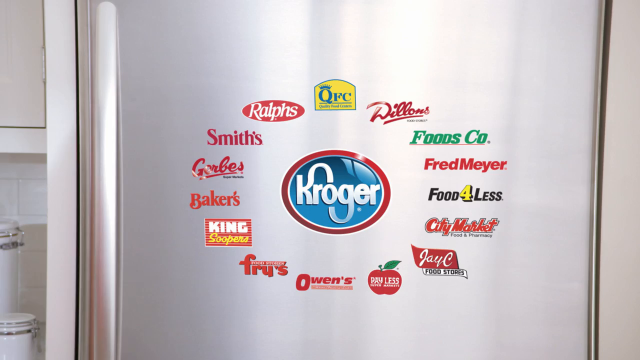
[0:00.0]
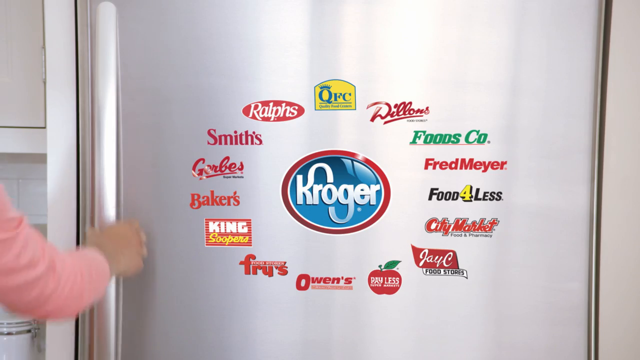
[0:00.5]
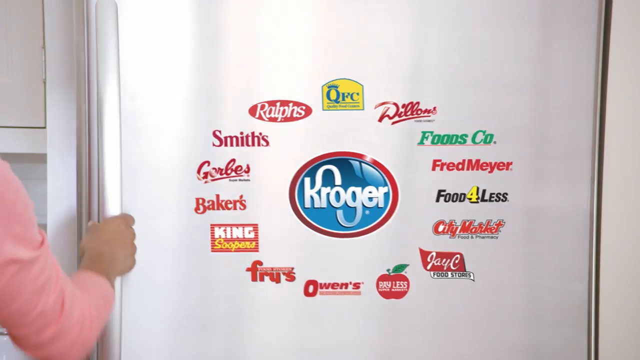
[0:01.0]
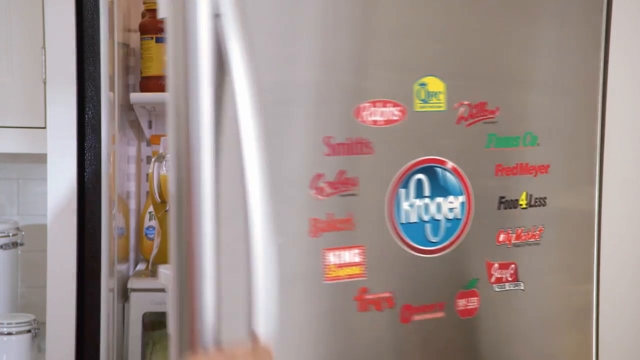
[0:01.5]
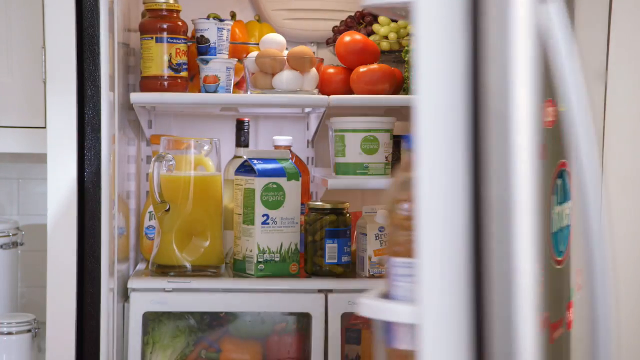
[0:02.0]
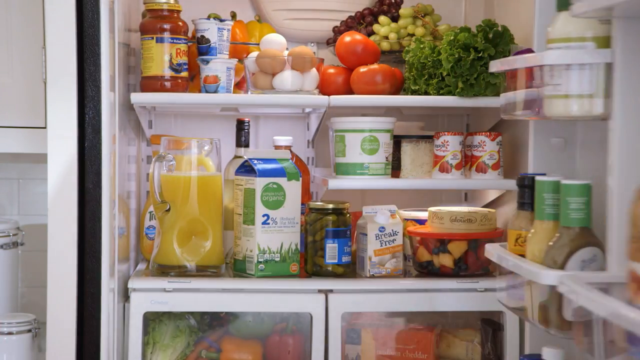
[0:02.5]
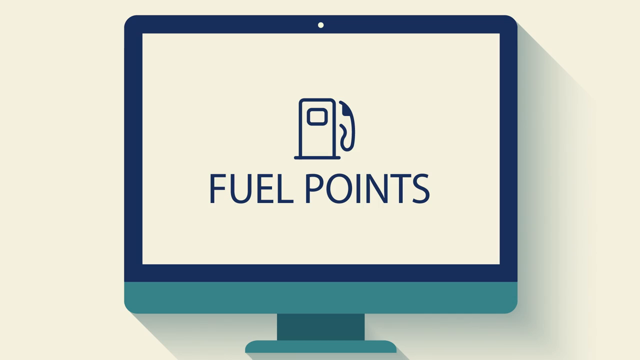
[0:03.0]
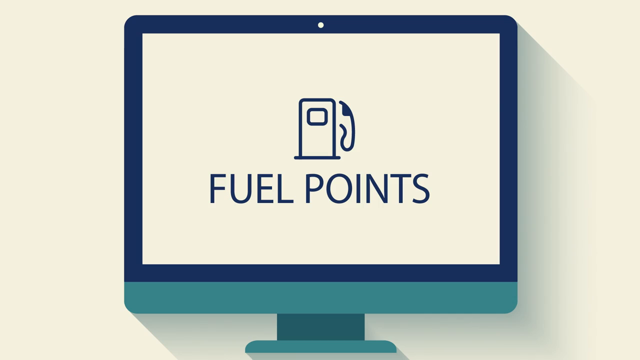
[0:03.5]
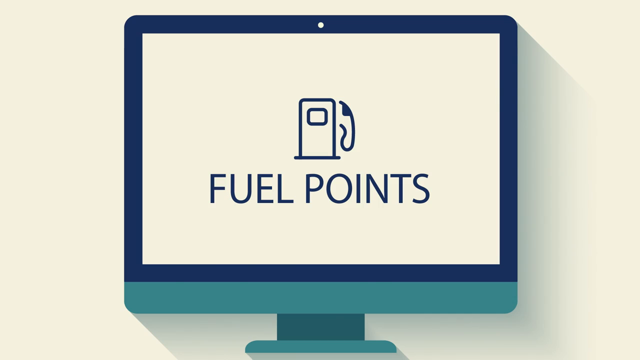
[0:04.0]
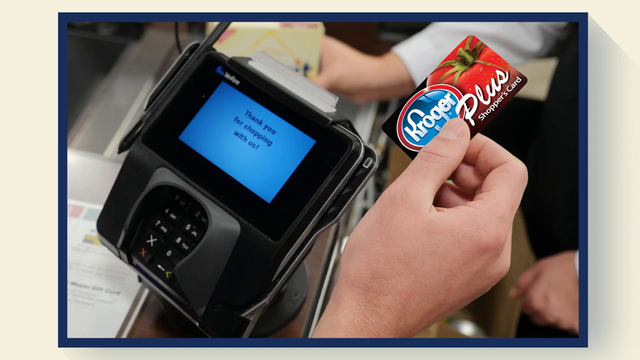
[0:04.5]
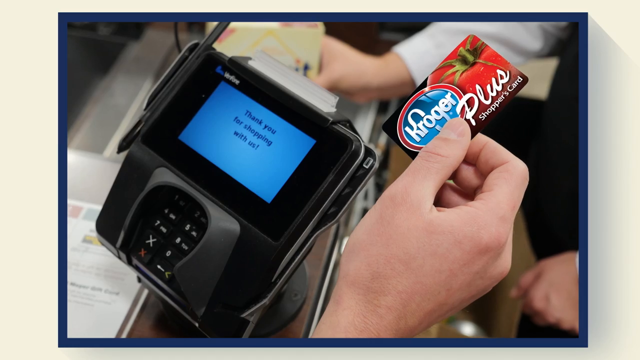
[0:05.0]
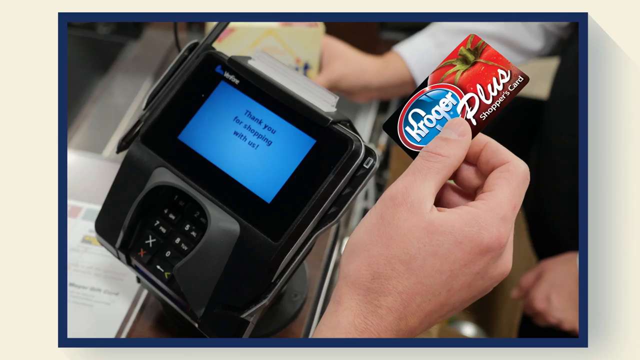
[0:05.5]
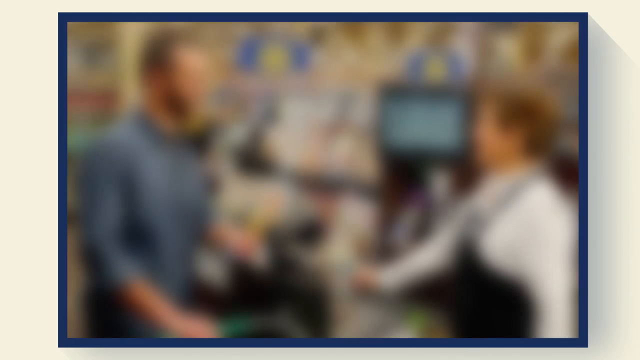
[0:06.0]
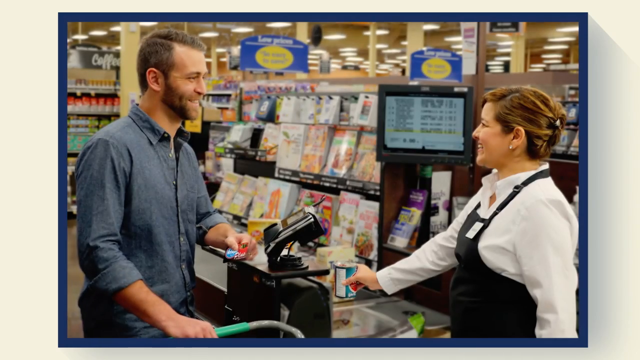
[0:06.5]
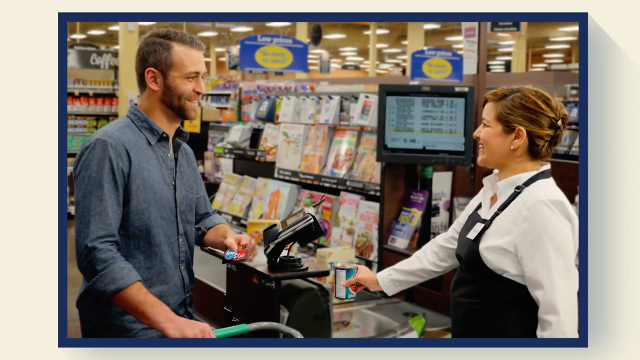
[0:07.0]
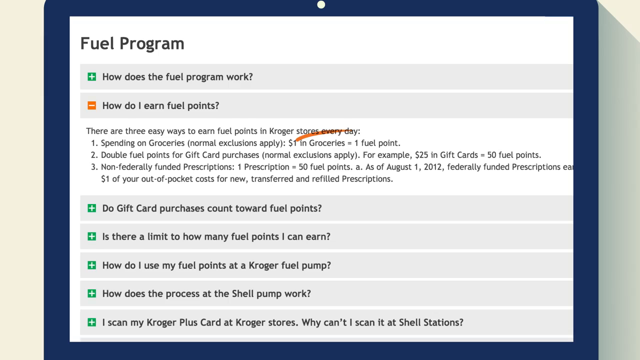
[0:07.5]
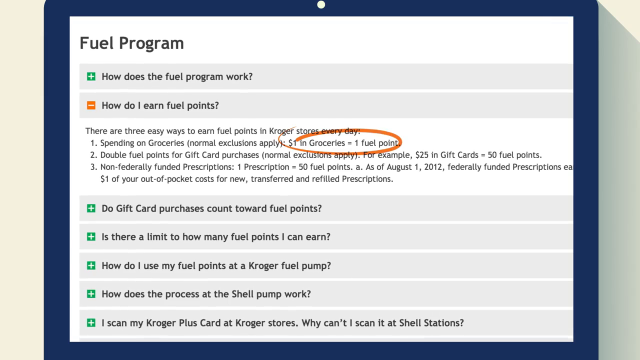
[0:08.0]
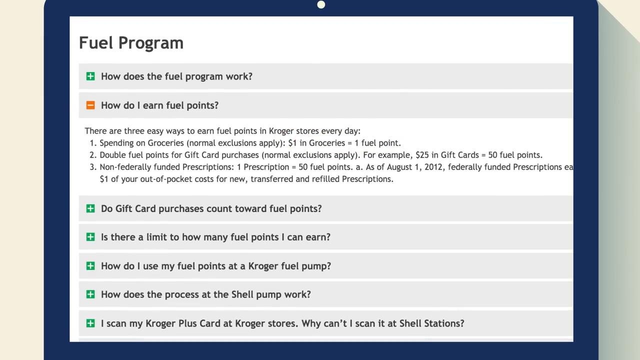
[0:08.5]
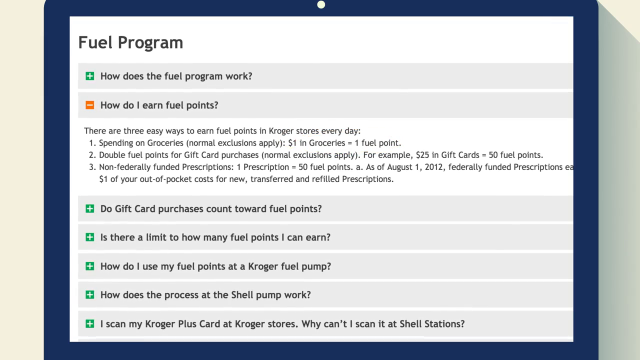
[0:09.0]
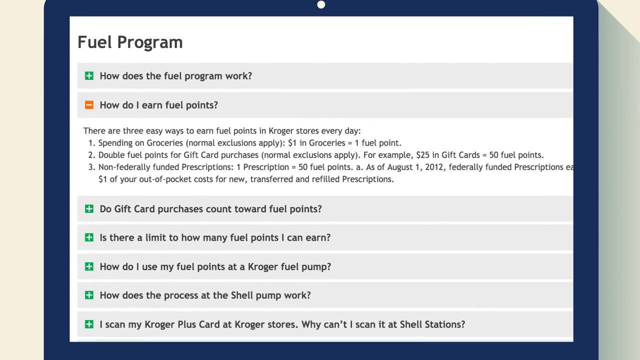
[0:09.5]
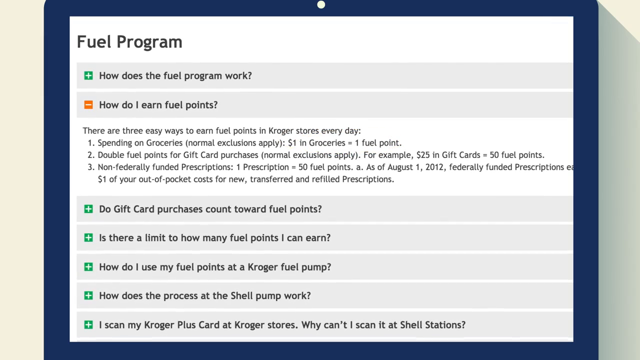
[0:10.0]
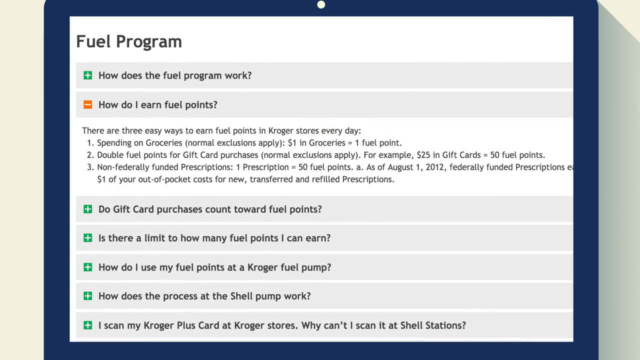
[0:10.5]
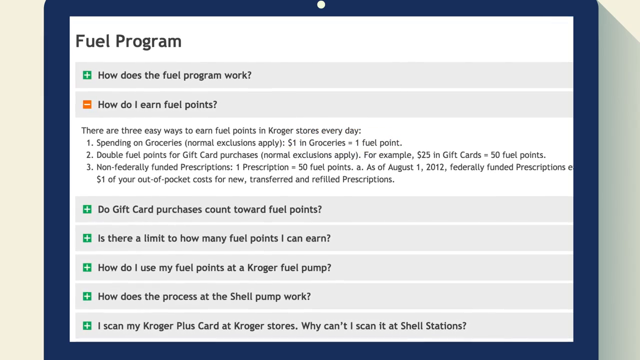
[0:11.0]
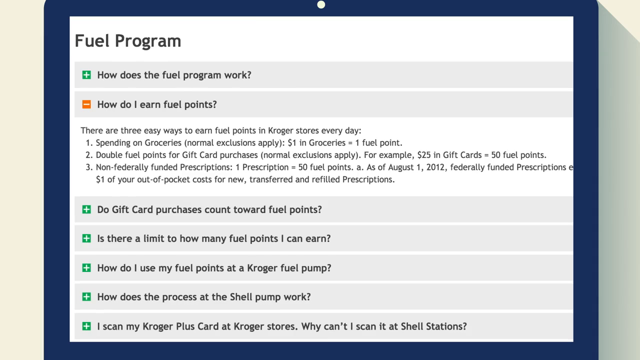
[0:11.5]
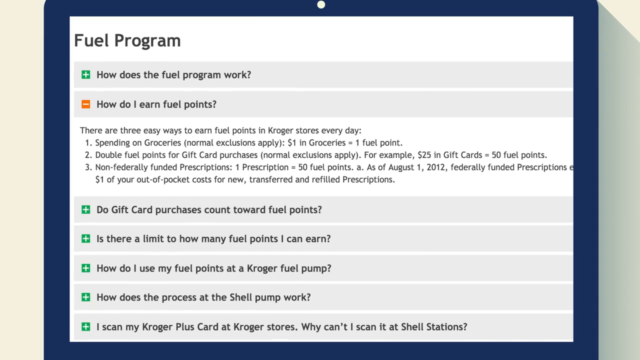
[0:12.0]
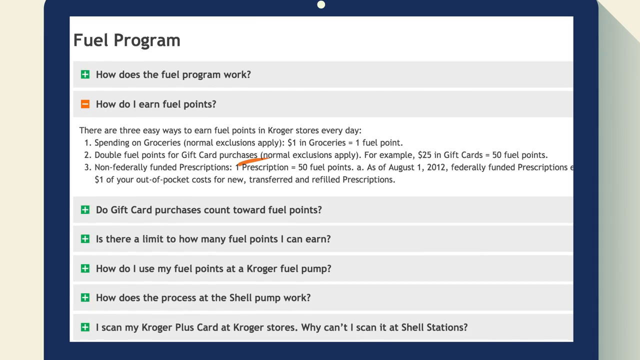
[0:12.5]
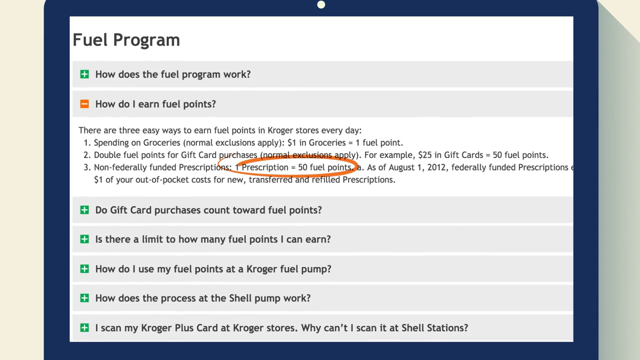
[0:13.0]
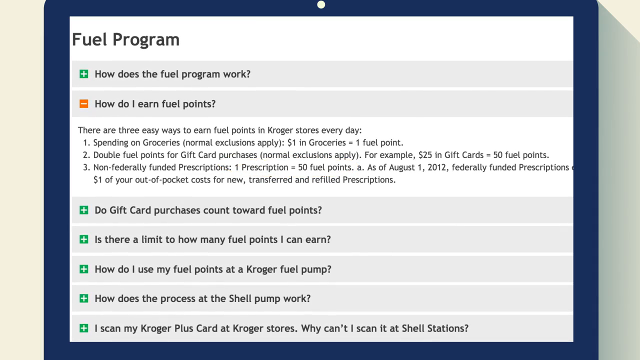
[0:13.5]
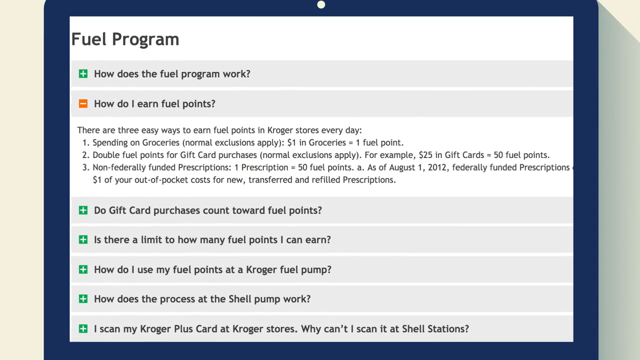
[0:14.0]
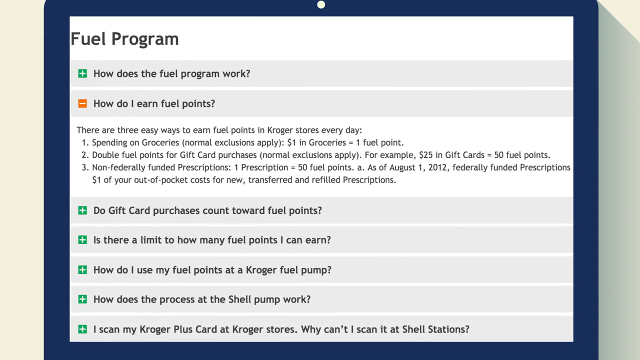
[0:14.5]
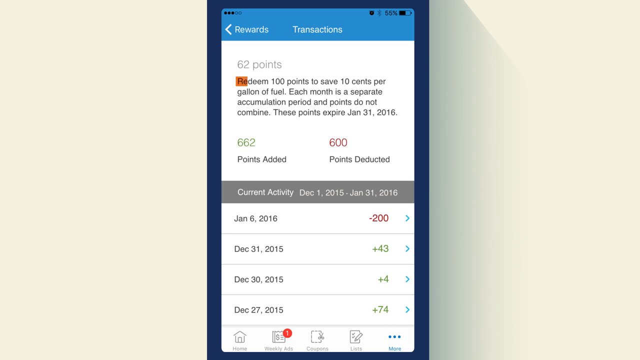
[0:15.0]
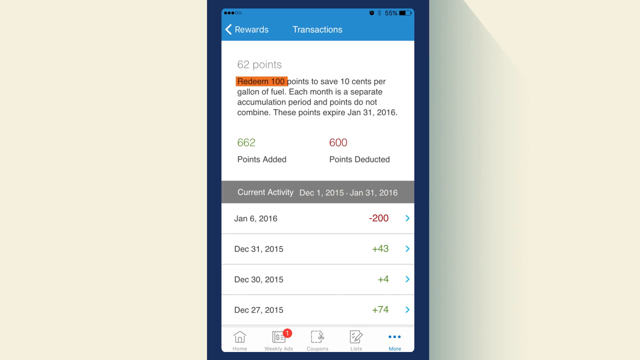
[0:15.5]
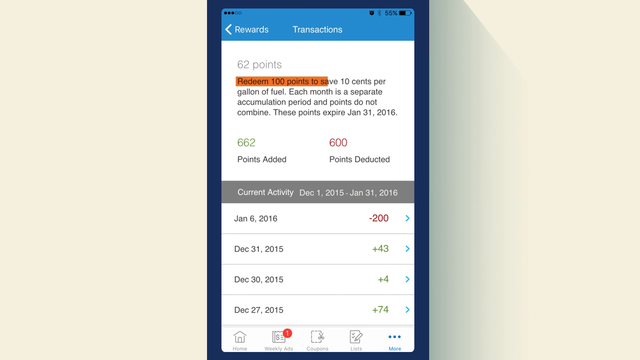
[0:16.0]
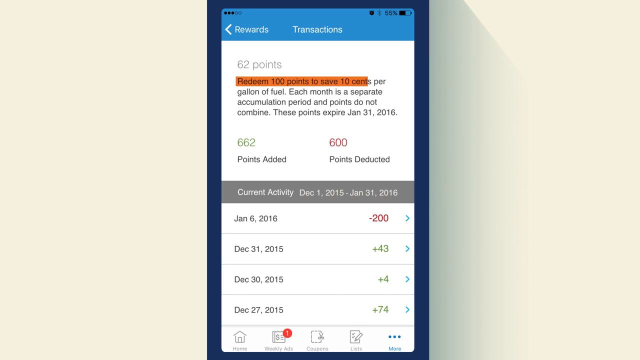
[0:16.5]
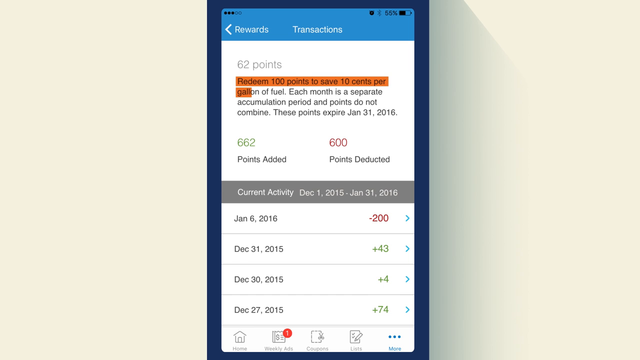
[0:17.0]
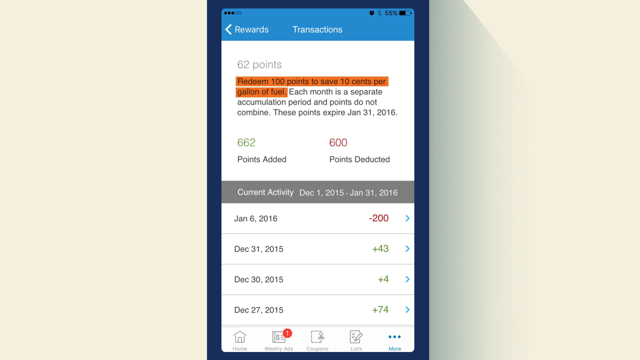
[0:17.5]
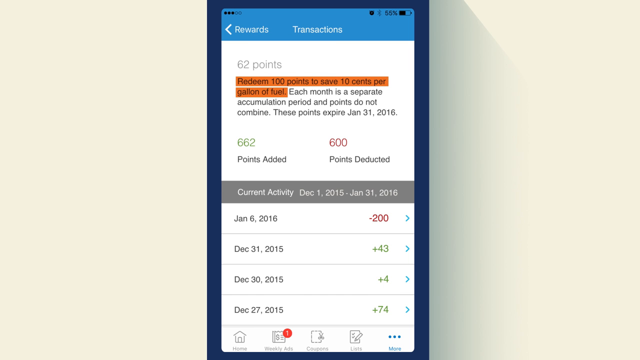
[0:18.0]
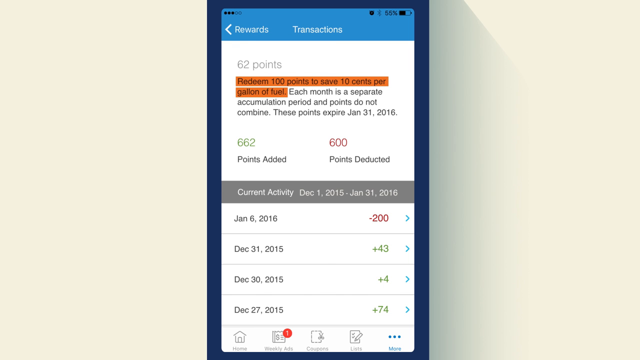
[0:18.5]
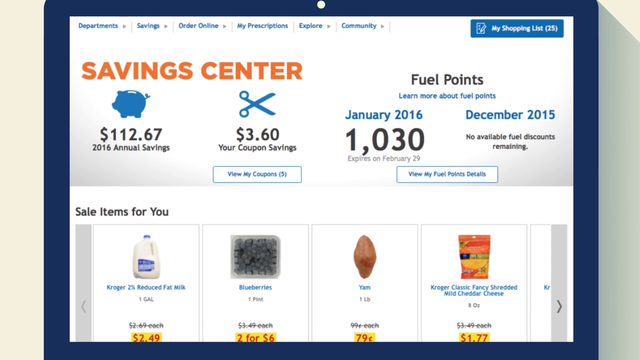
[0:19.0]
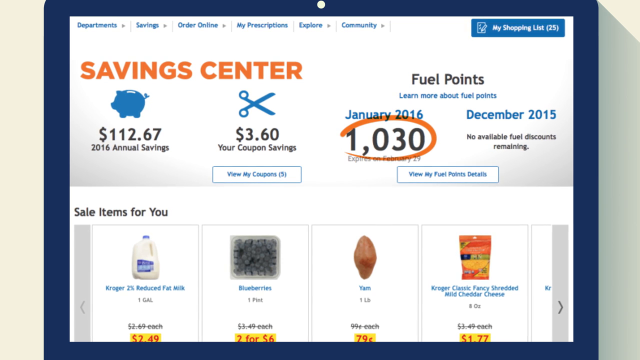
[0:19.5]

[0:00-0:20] The video opens on a large stainless steel fridge with a logo at the center of its door that says "Kroger"; the logo sits at the middle like a clock face. Around it, arranged like the hours on a clock face, are the logos of different brands, such as Willows, Foods Co, Fred Meyer, Food4Less, City Market, JC, Owens, Fry's, King, Shoppers, Bakers, Gerbers, Smiths, Ralphs and QFC. A hand appears and opens the fridge door, revealing the items inside, such as juices, fruits and vegetables. Fuel points are then shown, along with a checkout register where a Kroger Plus card is scanned to receive fuel points when shopping at Kroger. Text follows explaining the fuel program: one dollar spent on groceries earns one fuel point, which is highlighted with a red oval, and one prescription equals 50 fuel points, along with how the fuel points are redeemed and accrue with an expiry date.